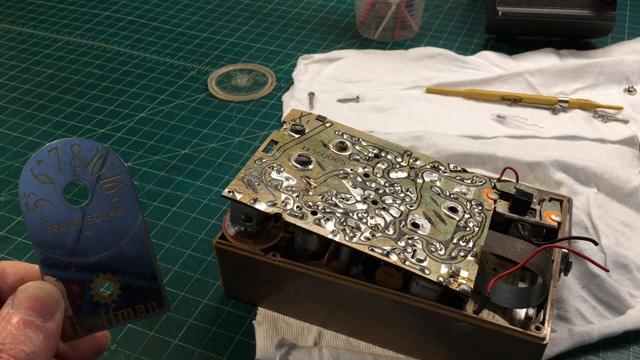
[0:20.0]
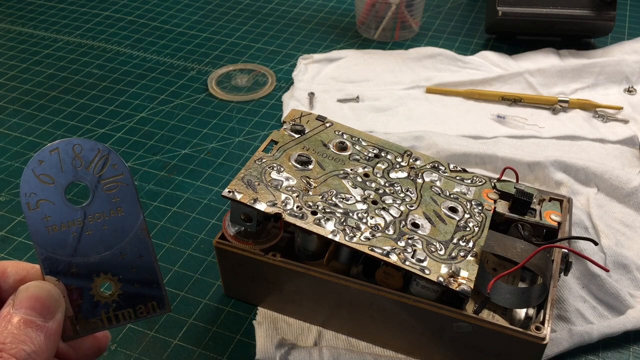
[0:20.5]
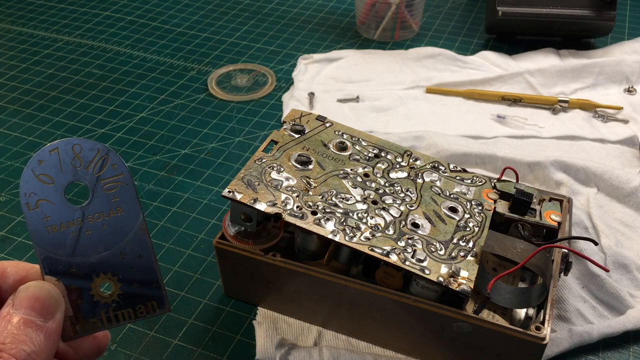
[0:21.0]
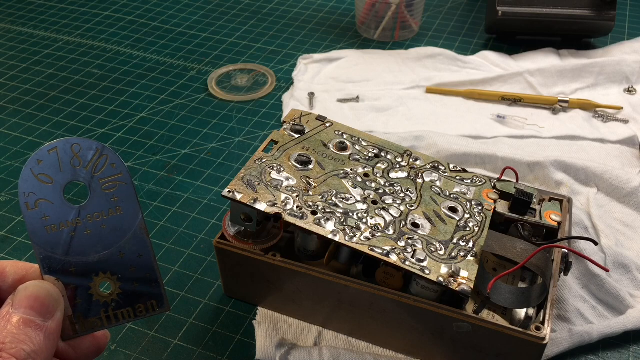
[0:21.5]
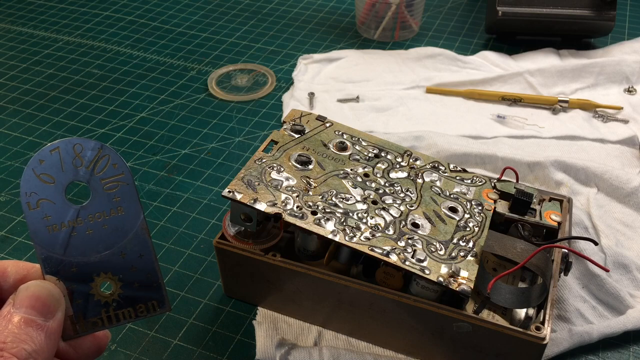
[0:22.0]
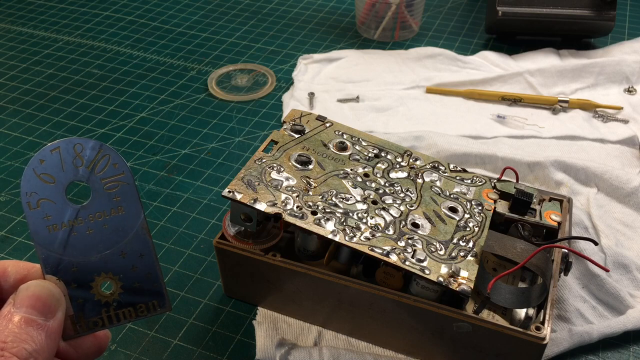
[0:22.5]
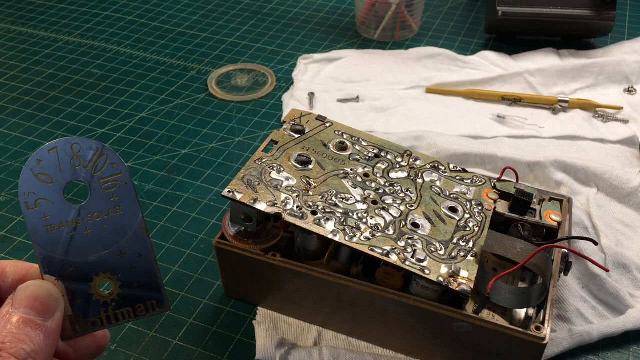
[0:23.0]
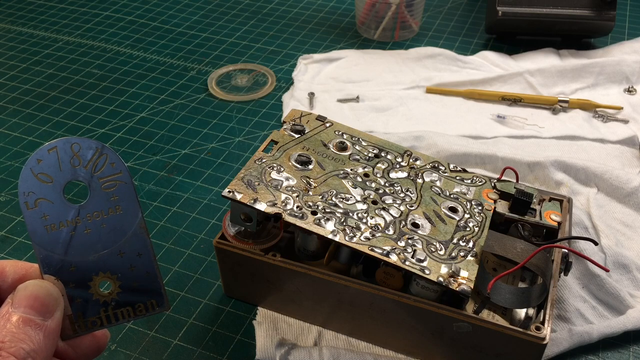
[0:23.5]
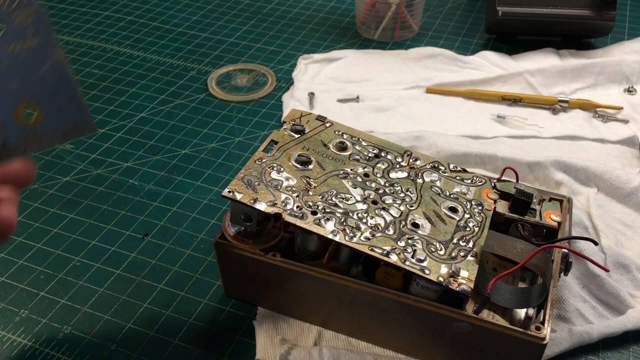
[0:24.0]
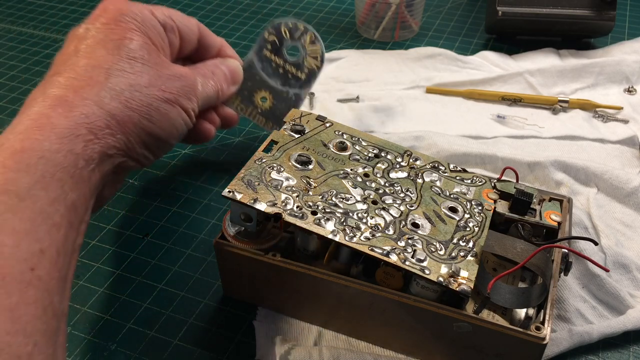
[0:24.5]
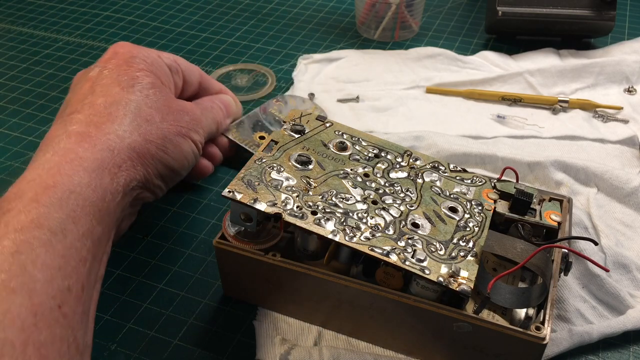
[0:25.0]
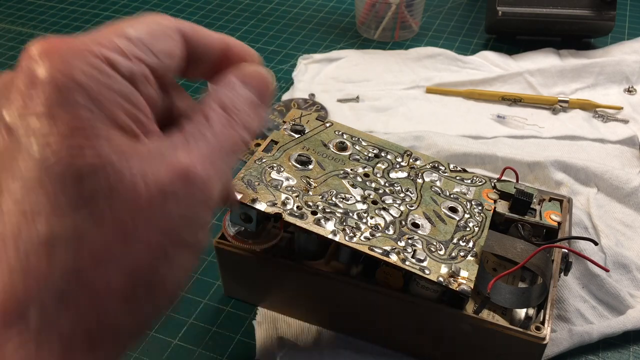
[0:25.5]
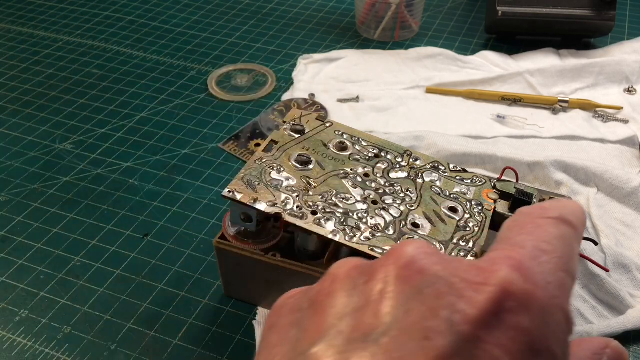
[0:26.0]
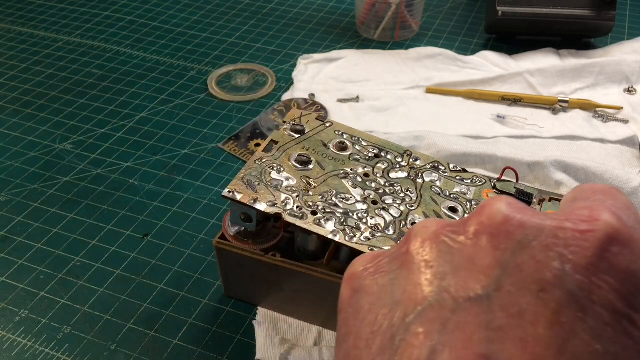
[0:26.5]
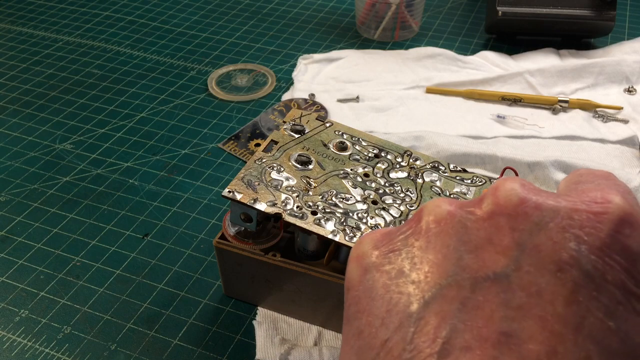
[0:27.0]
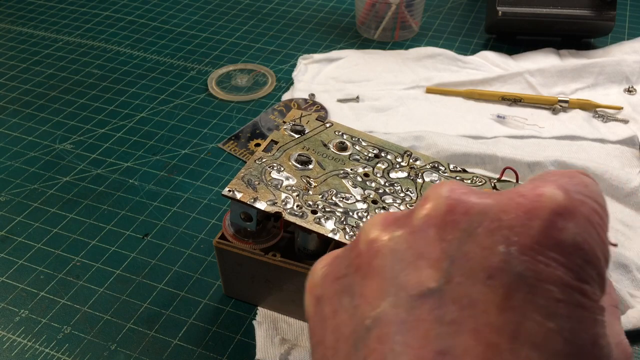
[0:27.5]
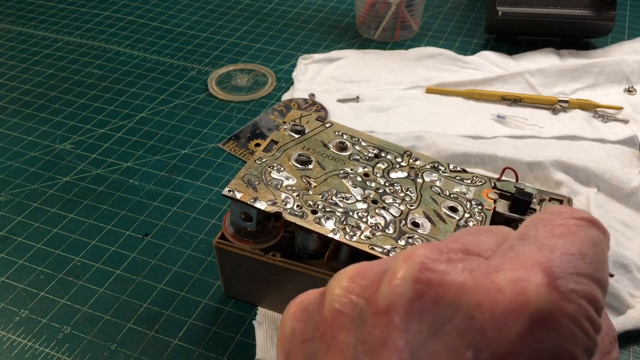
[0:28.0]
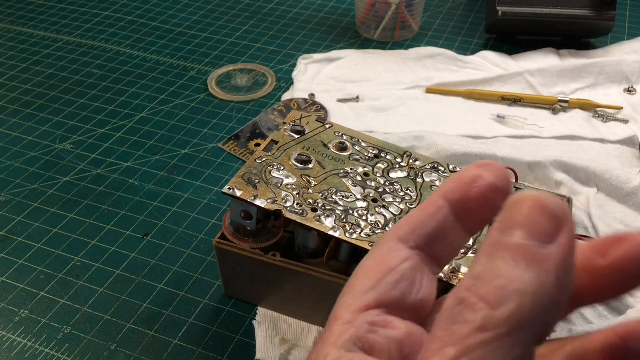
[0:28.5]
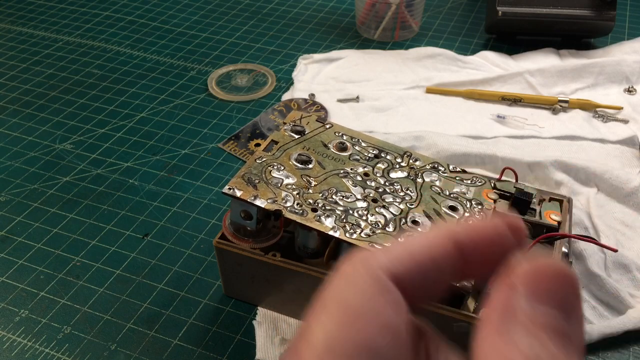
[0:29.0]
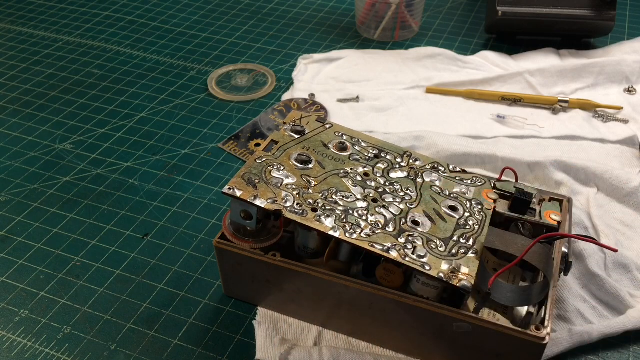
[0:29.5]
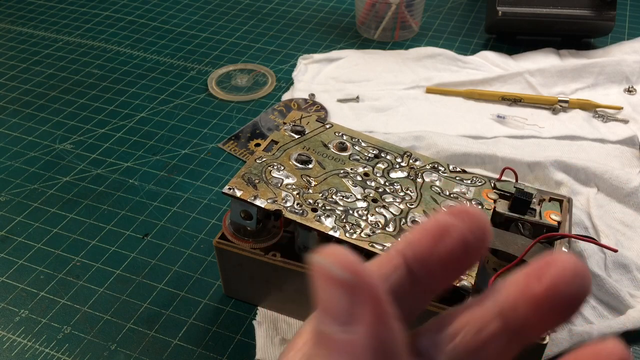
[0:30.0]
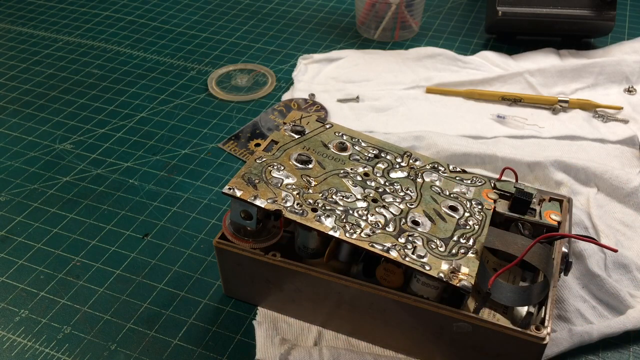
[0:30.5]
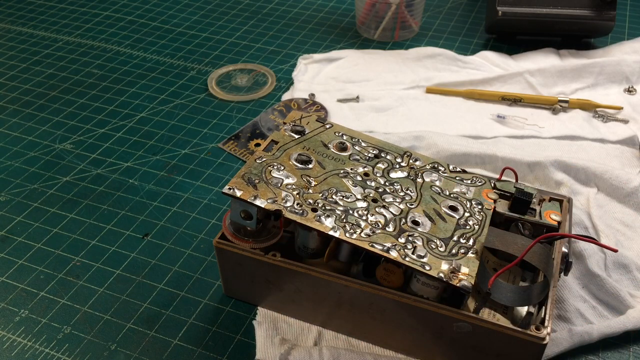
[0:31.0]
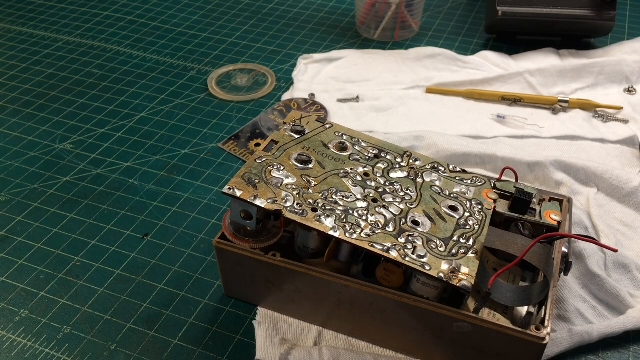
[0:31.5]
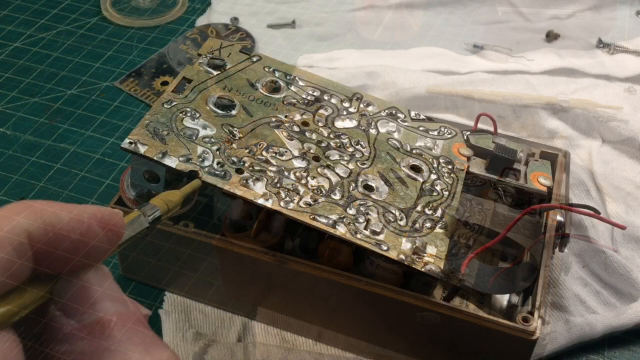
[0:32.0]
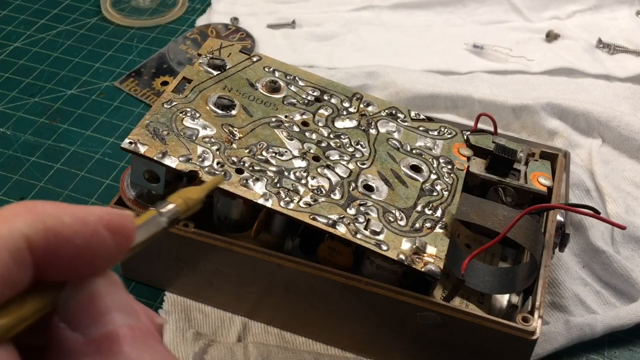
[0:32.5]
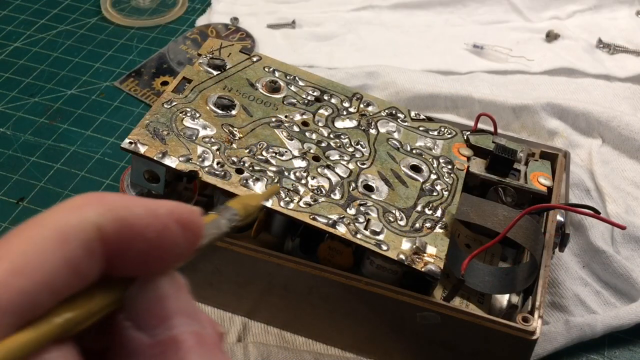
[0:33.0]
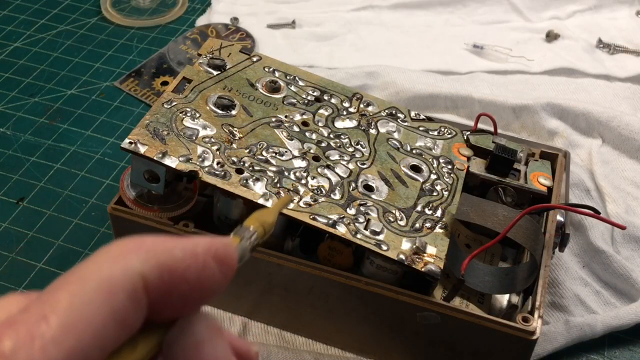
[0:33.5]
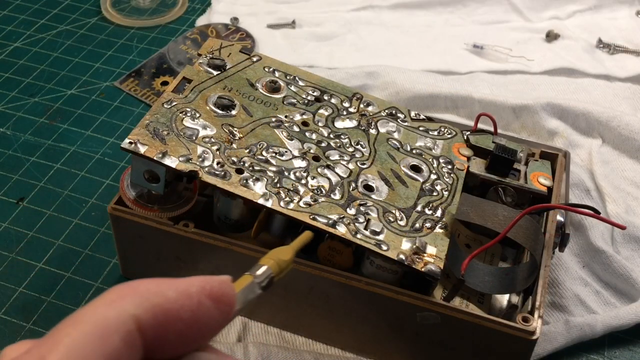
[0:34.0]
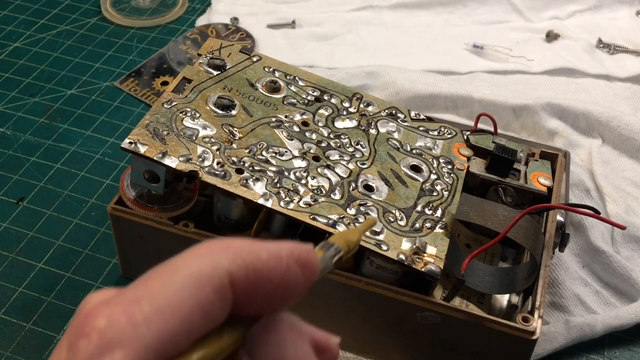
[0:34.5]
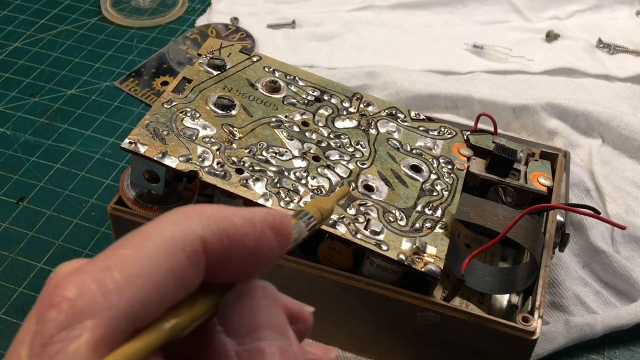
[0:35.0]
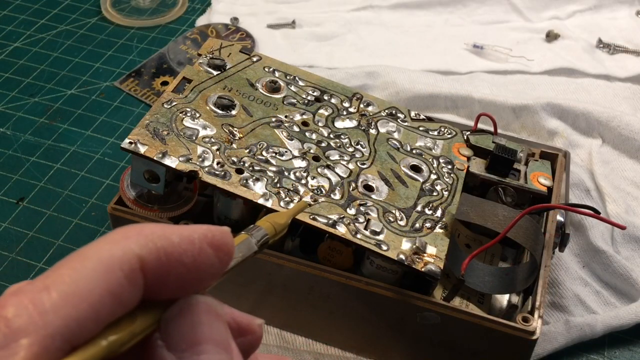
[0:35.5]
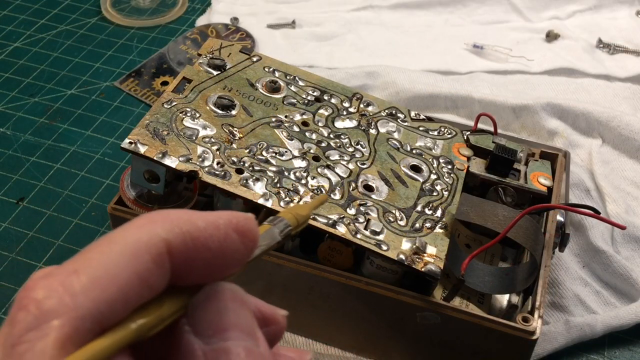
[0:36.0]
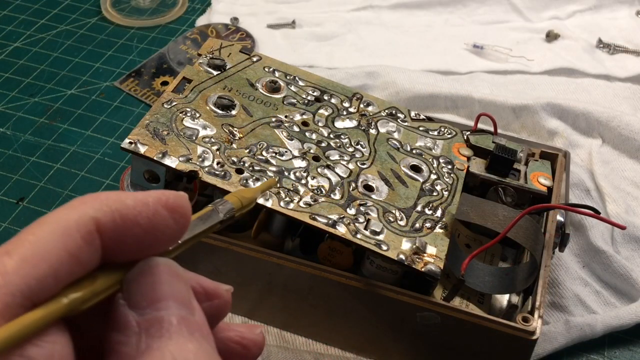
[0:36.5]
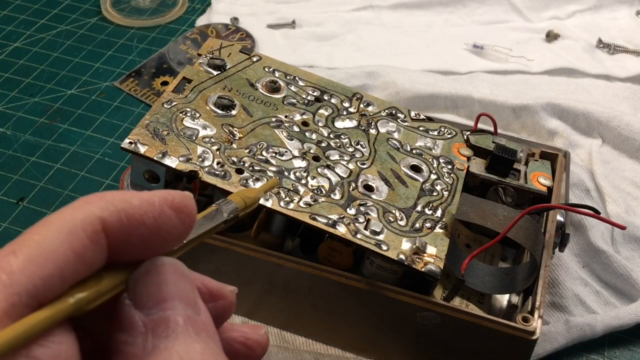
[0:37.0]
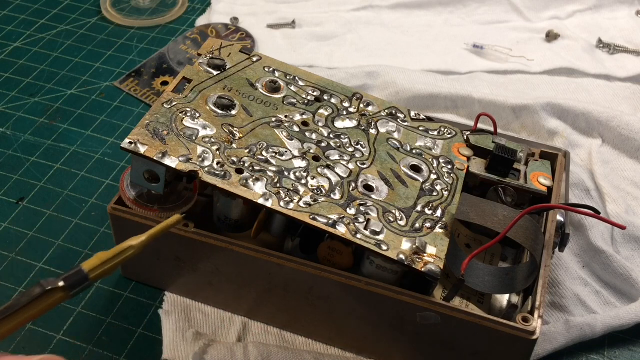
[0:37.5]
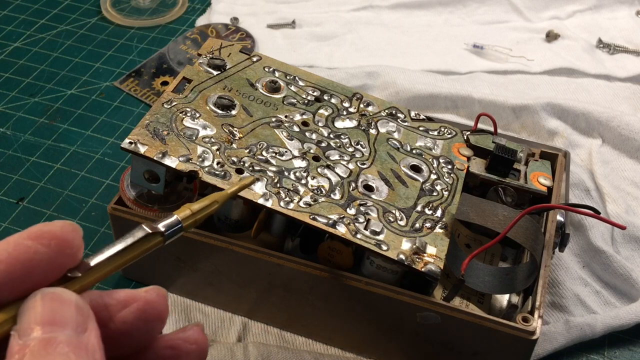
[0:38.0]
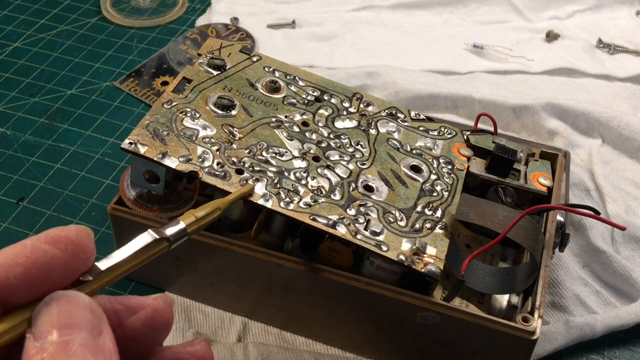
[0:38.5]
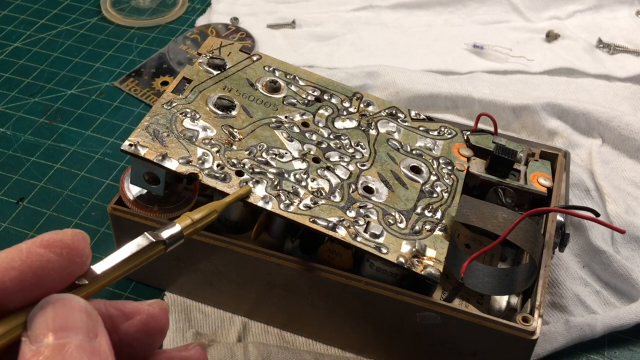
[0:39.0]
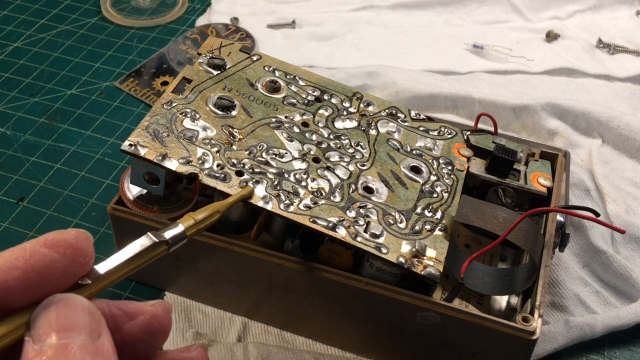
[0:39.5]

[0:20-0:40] The hand places the metal thing on the blackboard and then reaches for the old radio. After a cut, the hand holds some kind of tool and uses it to point out different parts of the radio to the viewers, also making gestures with it. The scene is otherwise the same: the white sheet is in the background, the tool is now in the person's hands, and the green blackboard is still there.